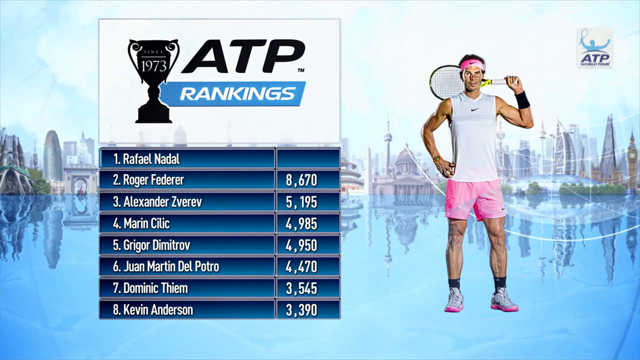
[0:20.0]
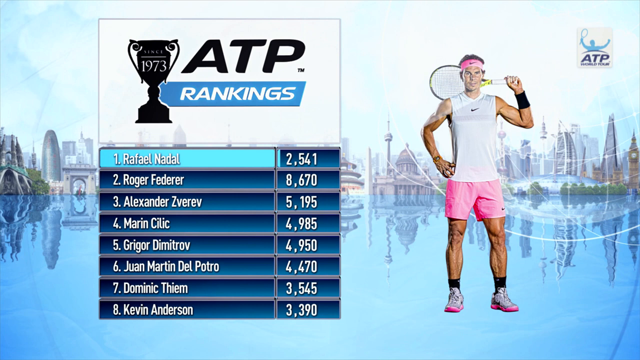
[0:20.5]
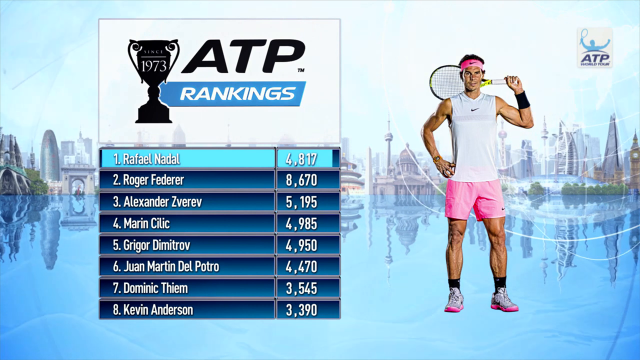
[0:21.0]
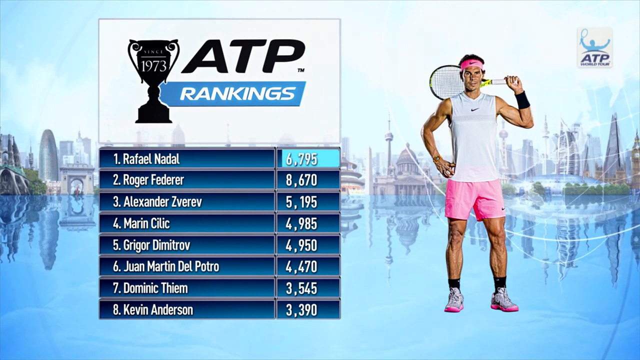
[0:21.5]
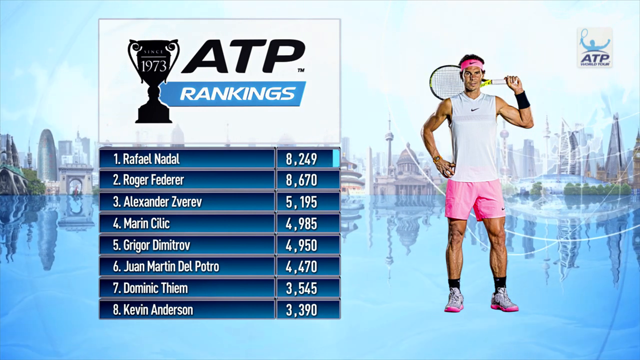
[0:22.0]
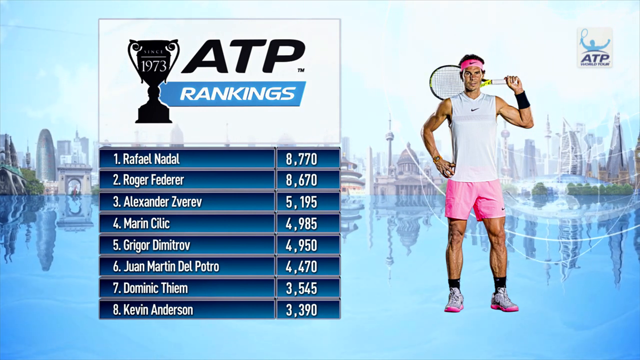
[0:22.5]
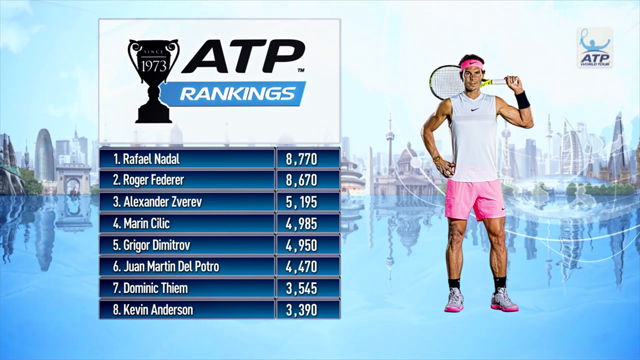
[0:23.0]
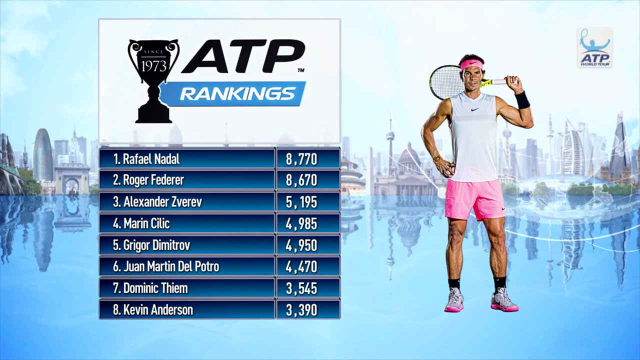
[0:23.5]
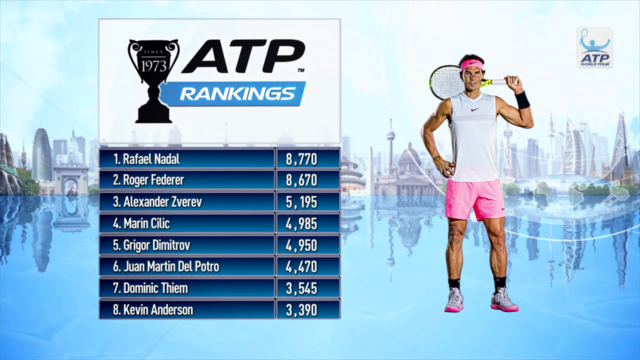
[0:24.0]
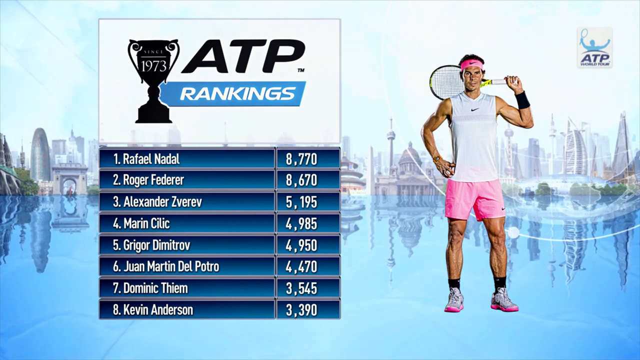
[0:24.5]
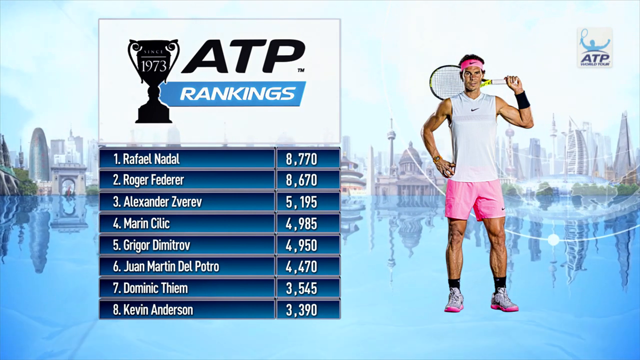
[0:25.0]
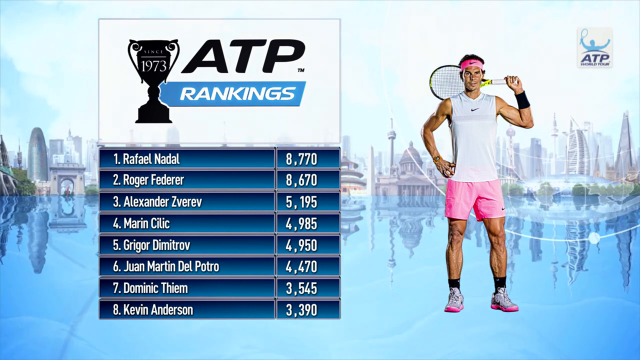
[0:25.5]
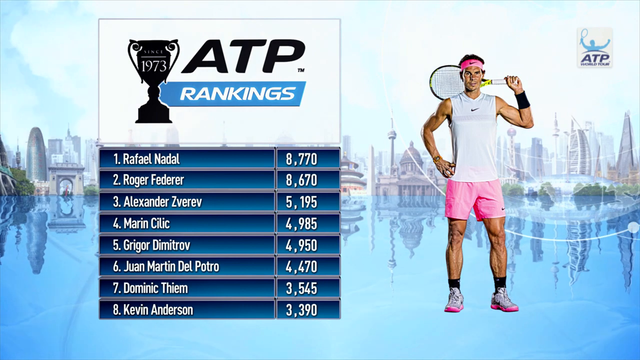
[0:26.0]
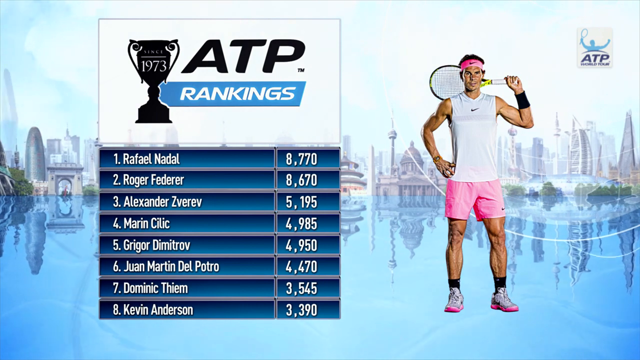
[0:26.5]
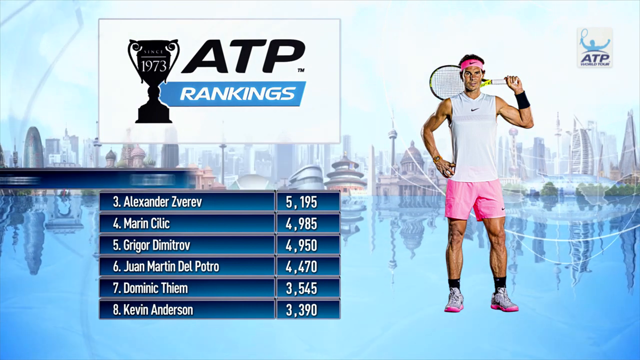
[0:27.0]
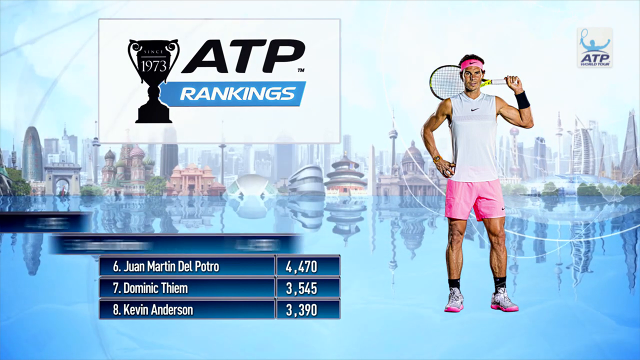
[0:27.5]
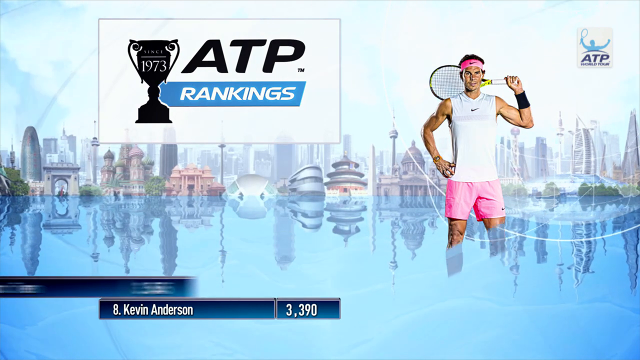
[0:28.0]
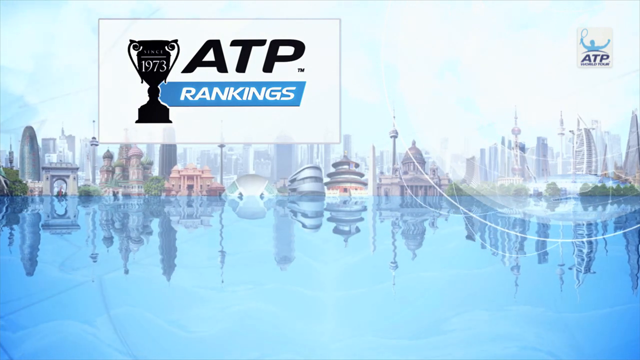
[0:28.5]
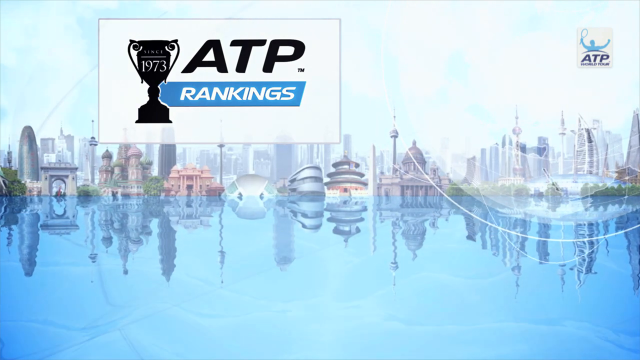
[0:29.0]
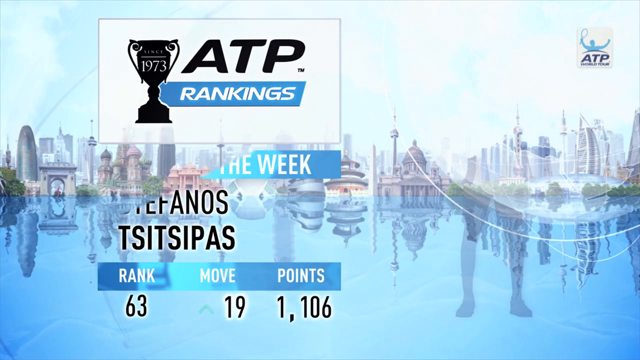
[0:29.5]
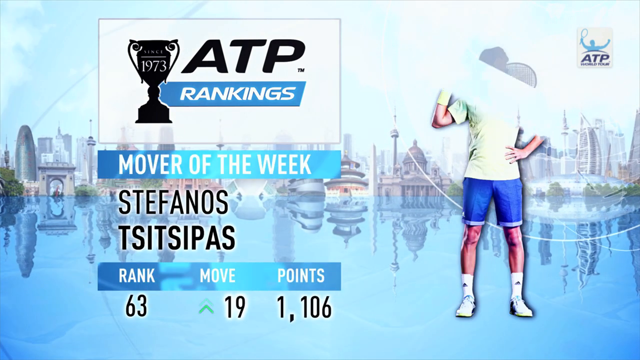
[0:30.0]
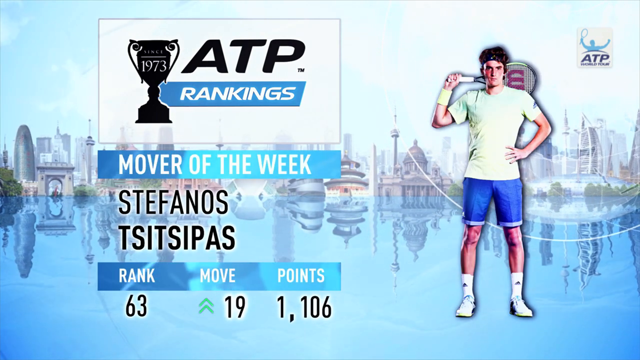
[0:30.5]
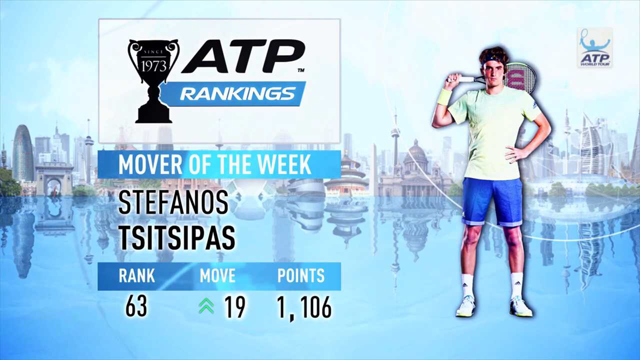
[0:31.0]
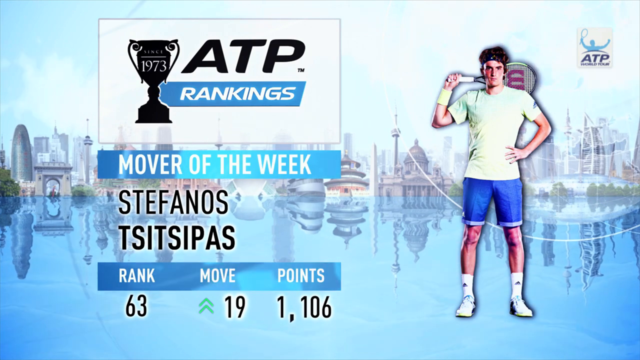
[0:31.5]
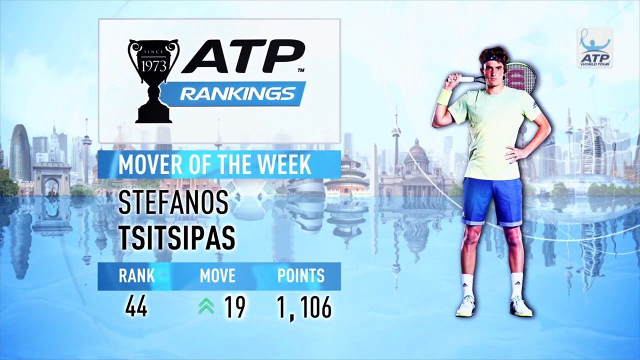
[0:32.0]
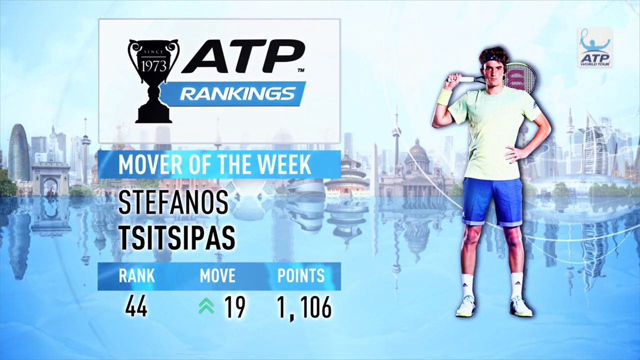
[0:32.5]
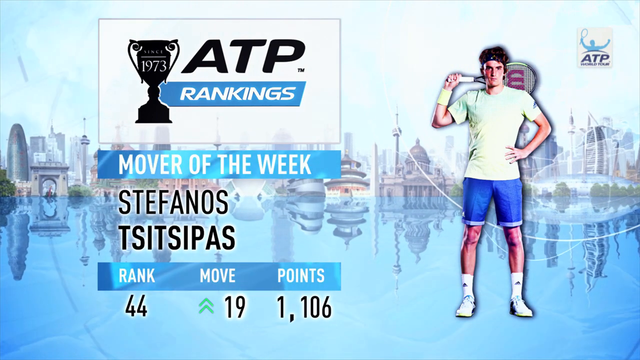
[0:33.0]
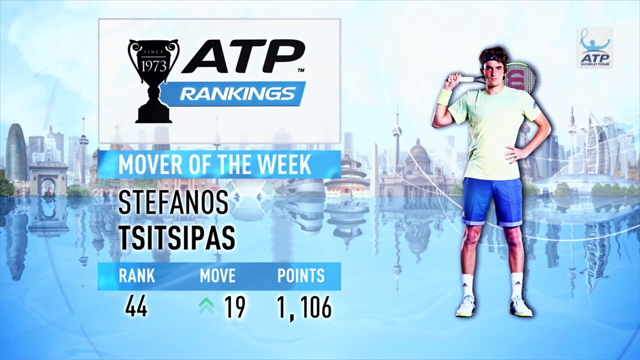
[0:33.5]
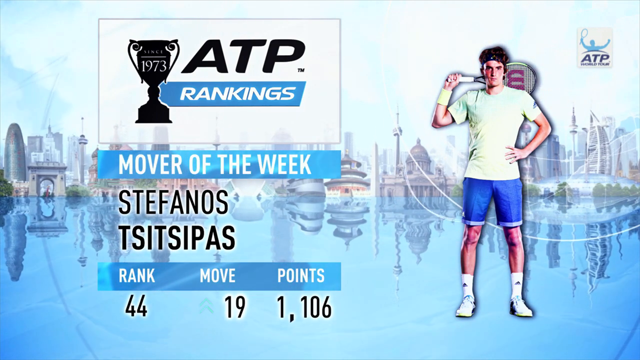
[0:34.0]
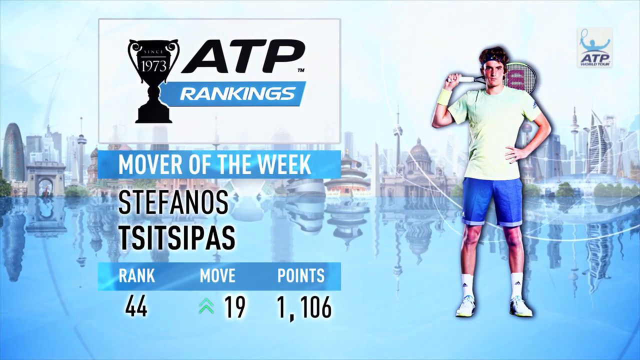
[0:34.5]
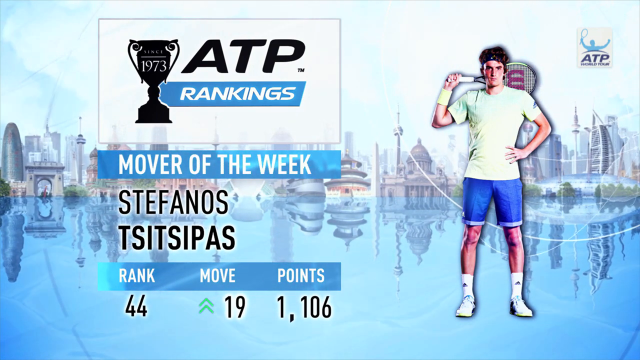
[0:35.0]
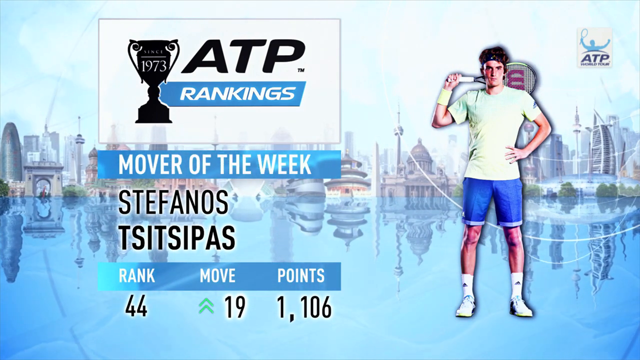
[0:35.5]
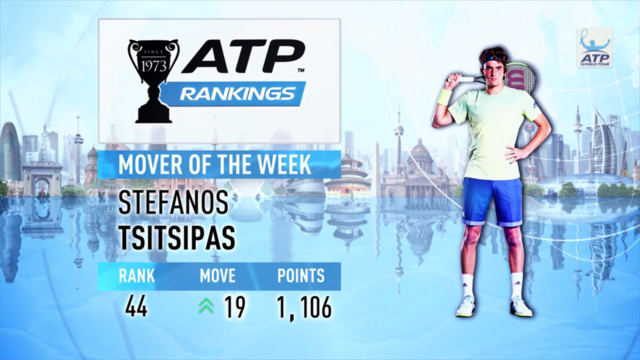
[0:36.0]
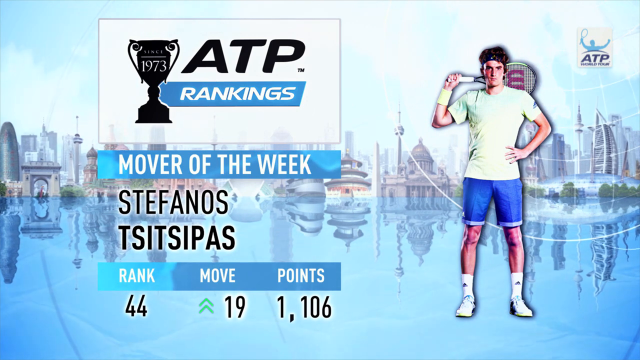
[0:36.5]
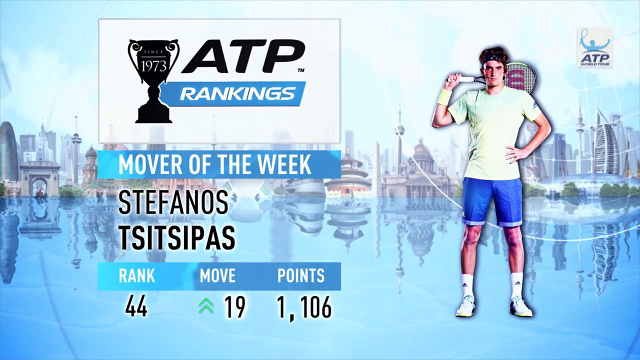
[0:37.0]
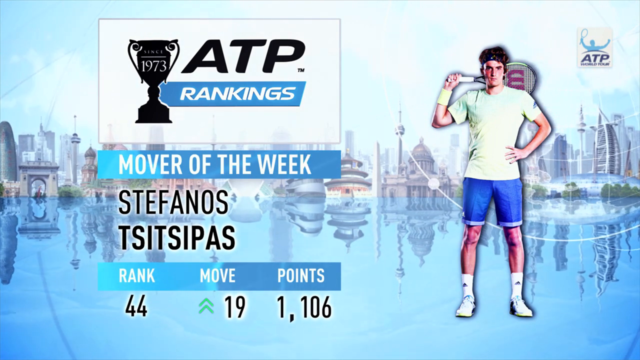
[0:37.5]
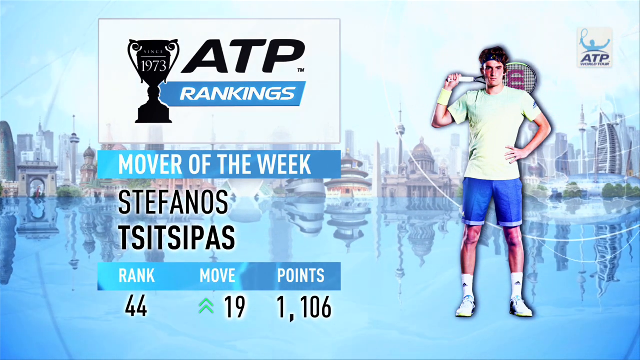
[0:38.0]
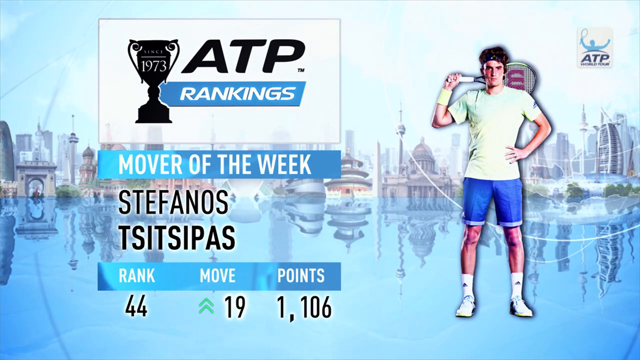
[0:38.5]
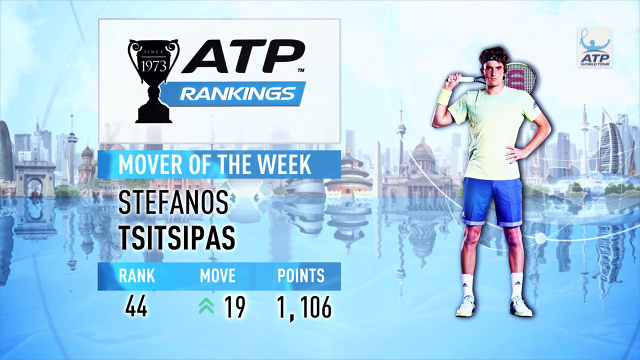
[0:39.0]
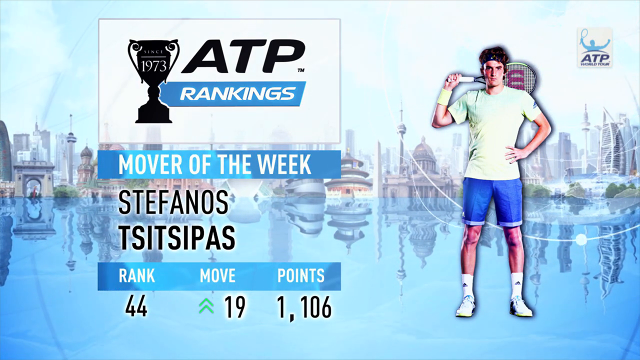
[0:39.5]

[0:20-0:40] The player on the right is replaced by another player wearing a white sleeveless shirt, pink shorts and white and pink trainers. He stands facing the viewer with his right hand on his hip and his left arm holding the racket behind his head. His name appears at the very top of the grid on the left, "1 Rafael Nadal", with the number 8,770 totalling up next to him. The shot holds for a few seconds before all the player name cells move quickly off the left of the screen one by one and the image of the player is wiped from the screen. A new tennis player appears on the right, first as a shadow before taking form. He wears a yellow shirt, blue shorts and white trainers and stands facing the viewer with his left hand on his hip, holding the racket behind his head. Underneath "ATP Rankings" on the left, text reads "Mover of the Week, Stefanos Tsitsipas", and beneath that "Rank 63, Move 19, Points 1,106", presented in white and black text with blue rectangular boxes that have a shimmering effect. The shot holds while the globe graphic rotates behind the image of Tsitsipas, and the montage of landmarks remains on the horizon at the far side of the expanse of water.